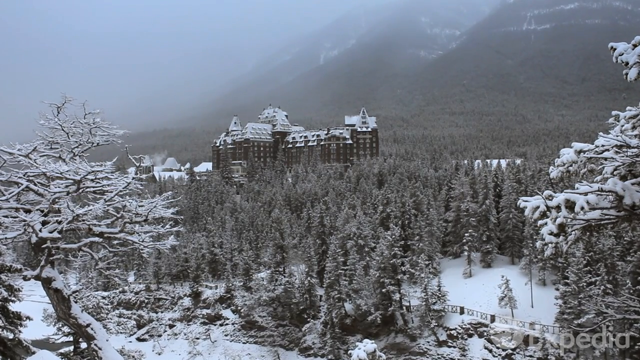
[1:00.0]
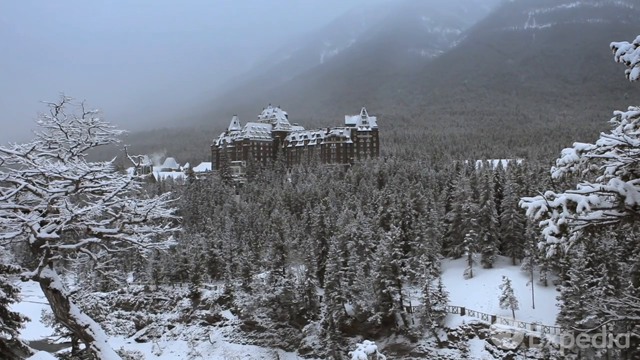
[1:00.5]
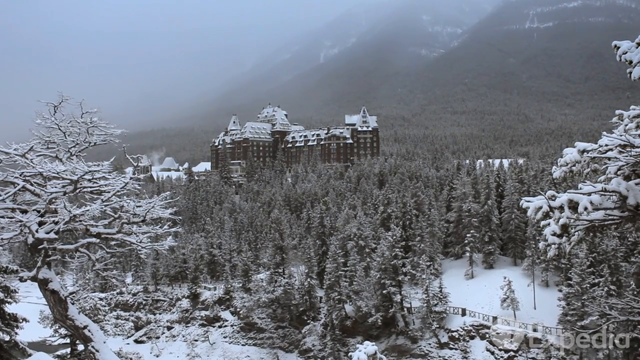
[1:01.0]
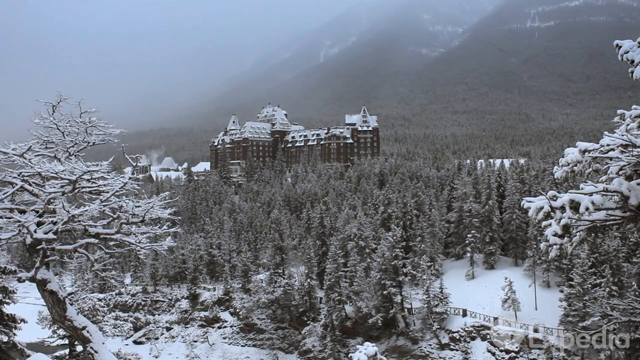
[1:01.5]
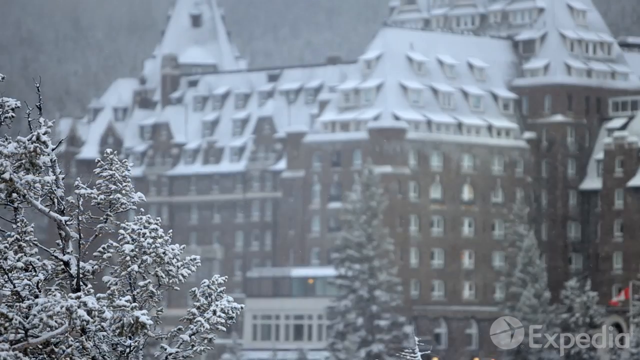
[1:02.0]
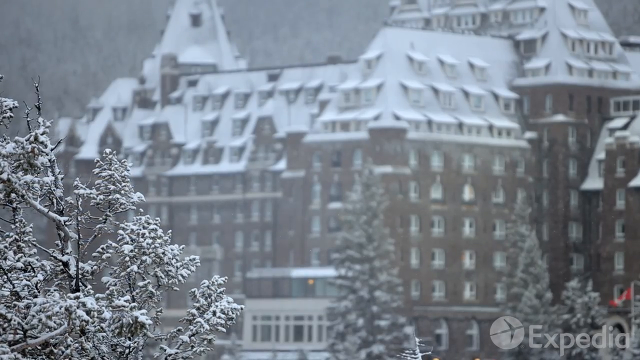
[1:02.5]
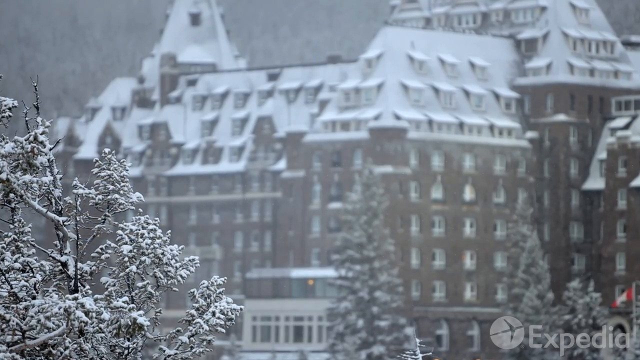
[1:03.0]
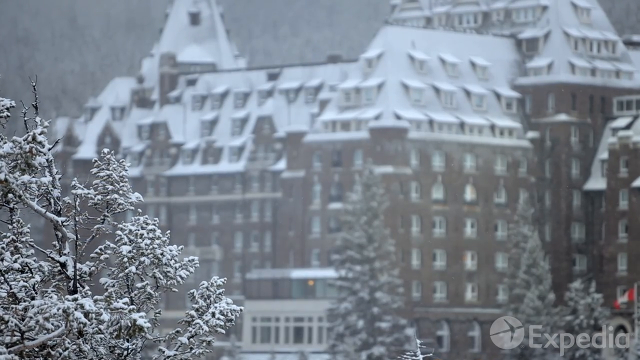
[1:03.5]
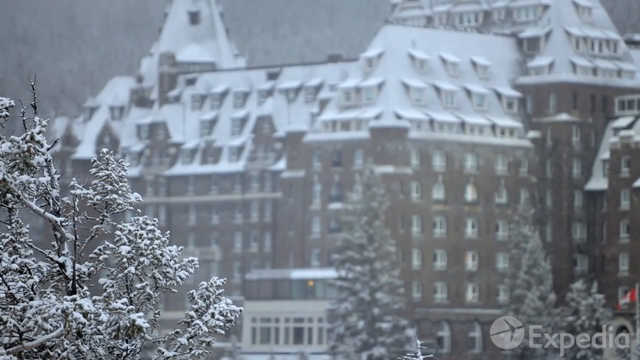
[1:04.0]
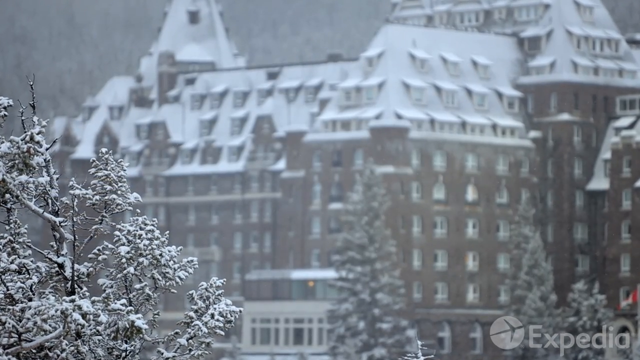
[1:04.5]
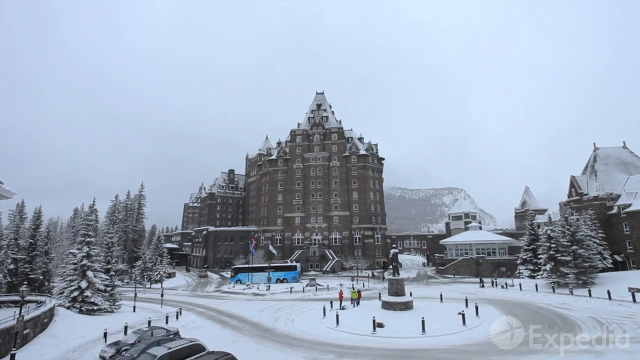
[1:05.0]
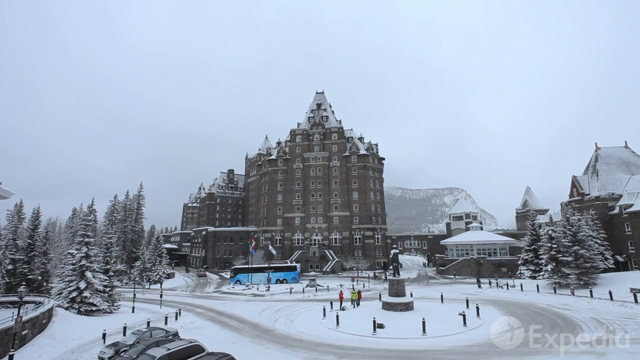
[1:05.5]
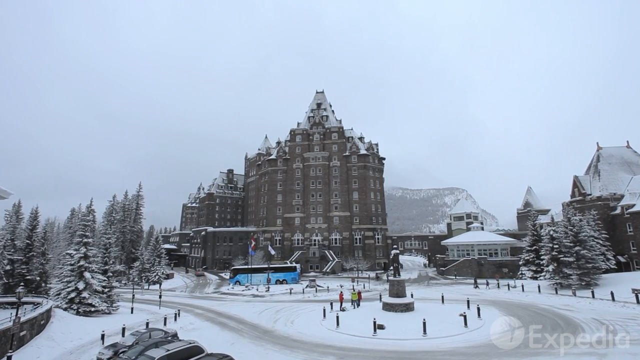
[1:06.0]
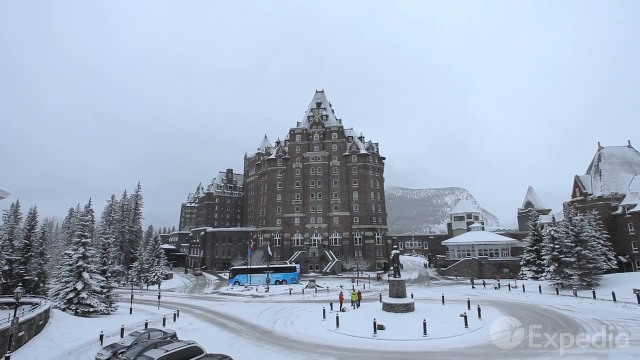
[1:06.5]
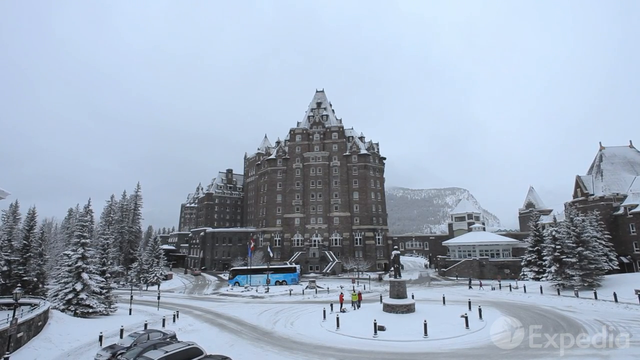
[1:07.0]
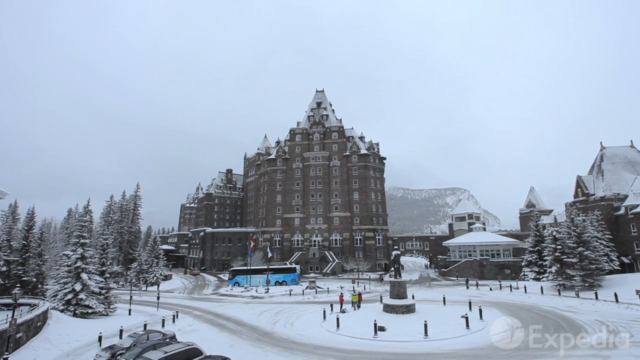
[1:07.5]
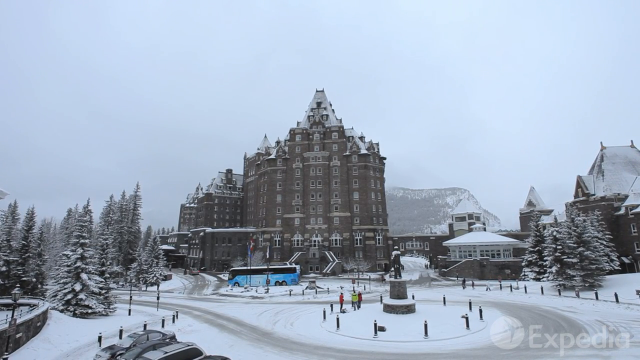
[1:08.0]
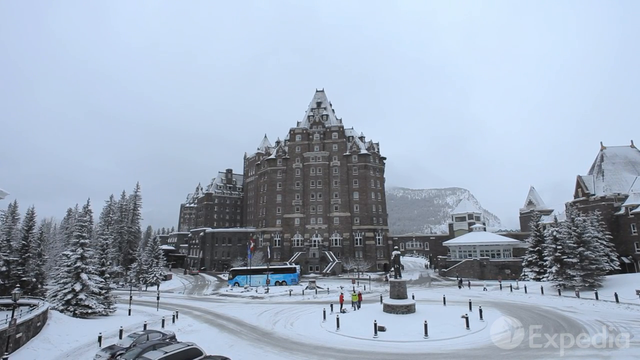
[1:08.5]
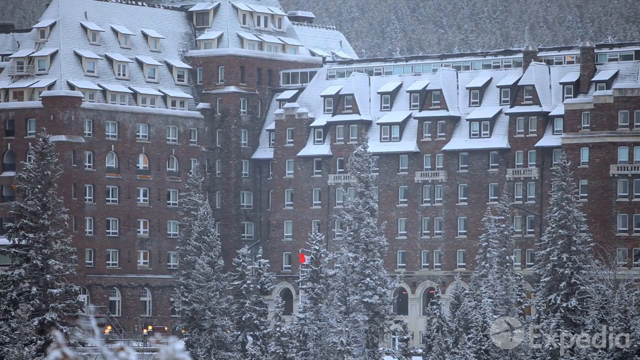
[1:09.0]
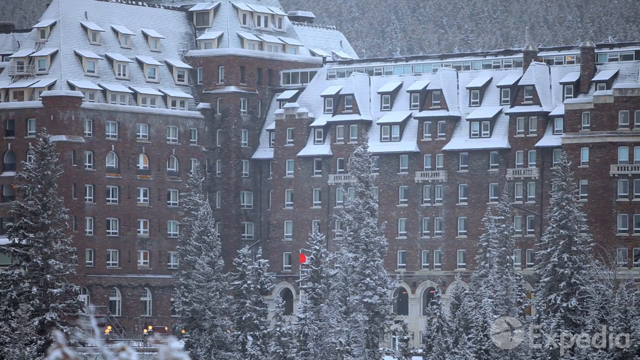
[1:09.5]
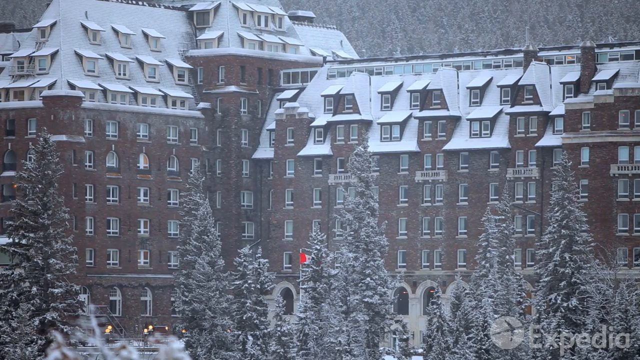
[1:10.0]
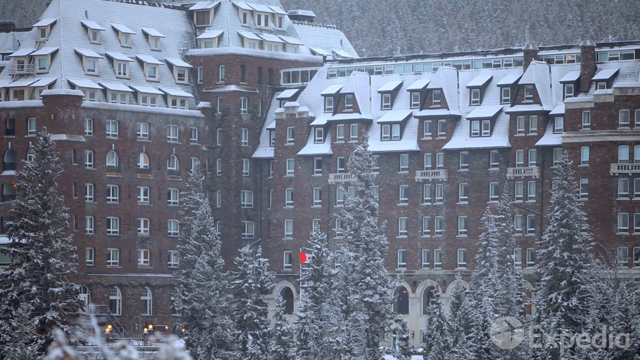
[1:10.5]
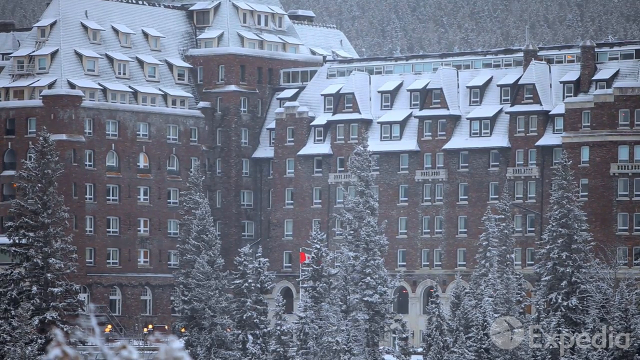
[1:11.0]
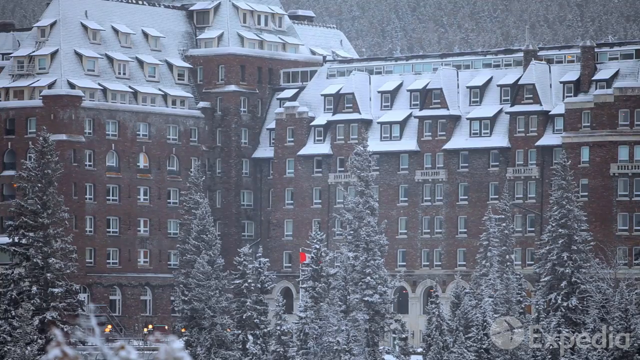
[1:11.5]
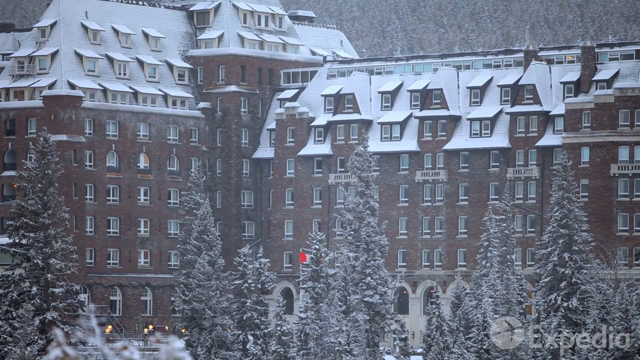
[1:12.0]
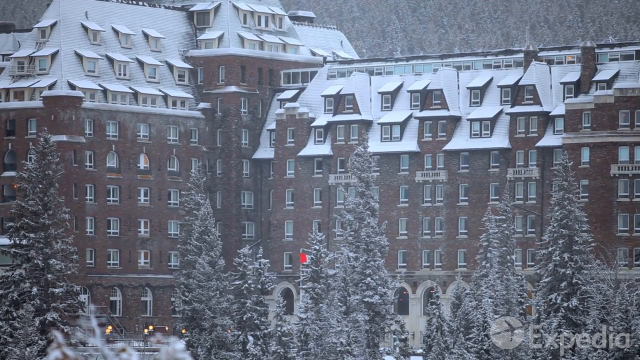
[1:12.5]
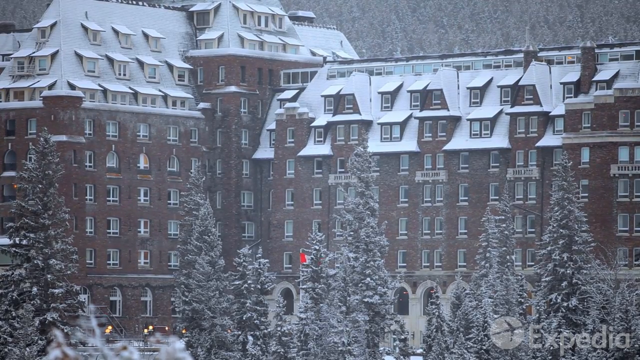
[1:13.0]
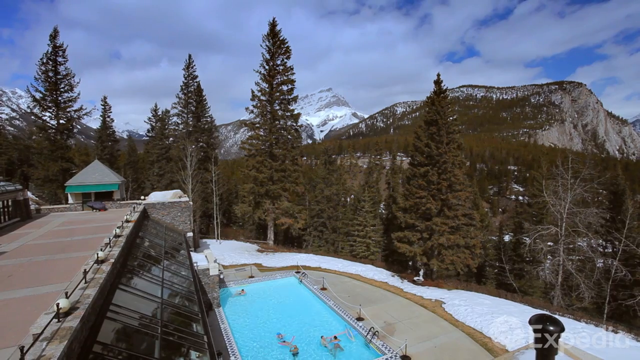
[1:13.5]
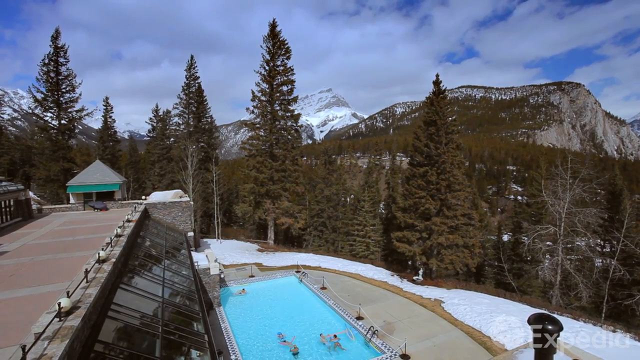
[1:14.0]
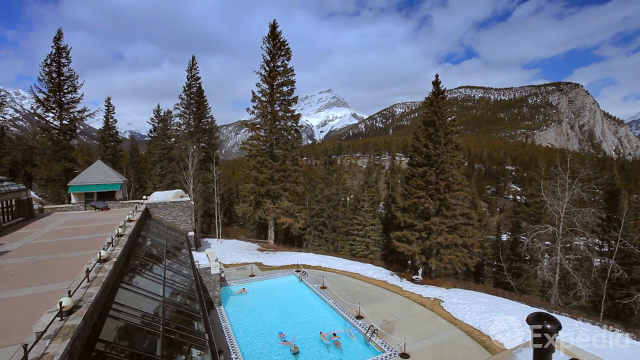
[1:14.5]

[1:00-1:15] The video zooms in closer to the building. There is a lot of haze in the background, and the trees are covered with snow. The next shot has the trees in focus and the building in the background out of focus. It is snowing, and there is a lot of snow on the ground. A few people are in front of the building near the sculpture, and more people are walking toward the building. A blue bus is parked in front of the building. It is very overcast, gray and snowy. A new shot shows the building with snow all over the roof; the building has lots of windows, and a few lights are on inside. Next is a shot from the building: there is a swimming pool with some people swimming, some snow on the ground next to it, large pine trees, and further in the background more mountains and blue skies with some clouds.